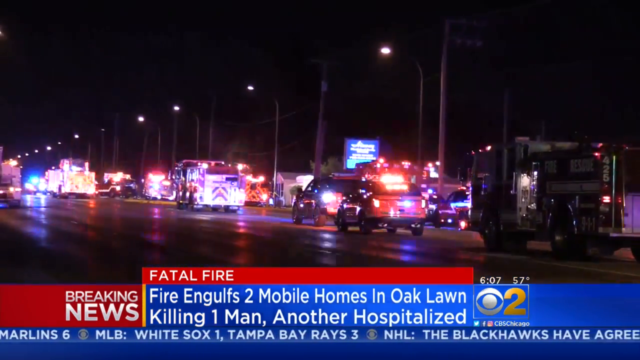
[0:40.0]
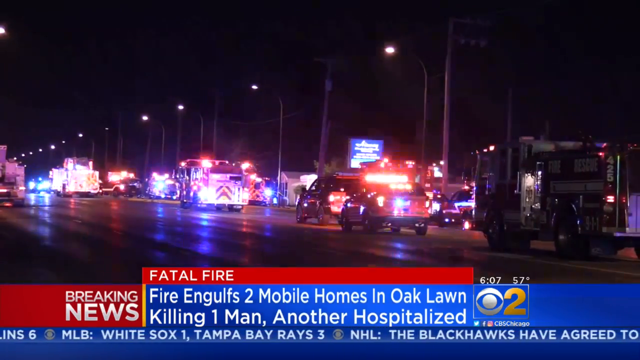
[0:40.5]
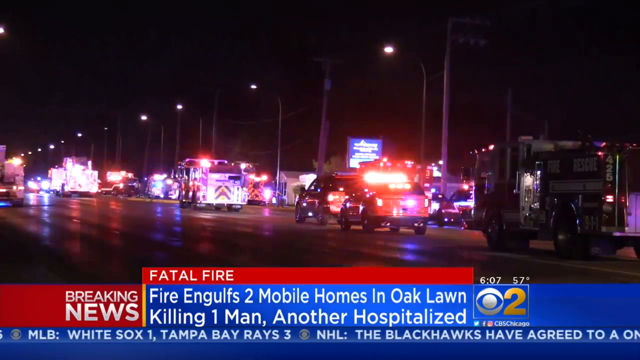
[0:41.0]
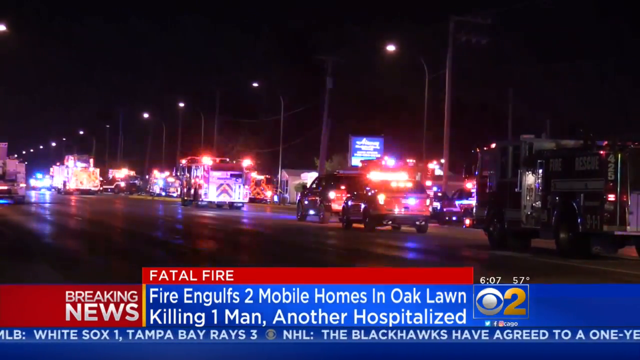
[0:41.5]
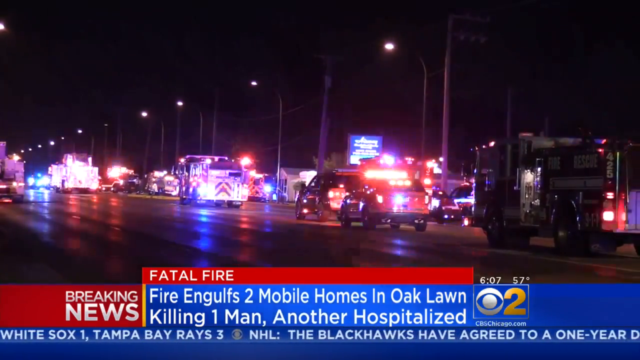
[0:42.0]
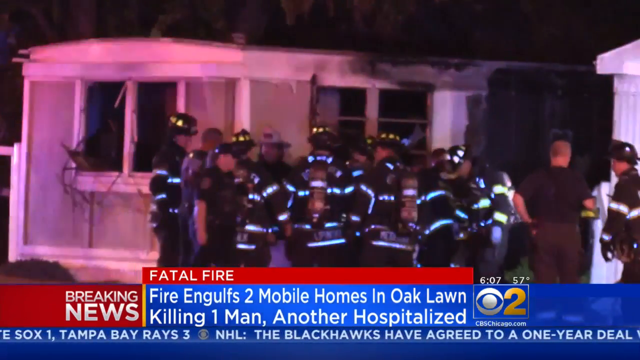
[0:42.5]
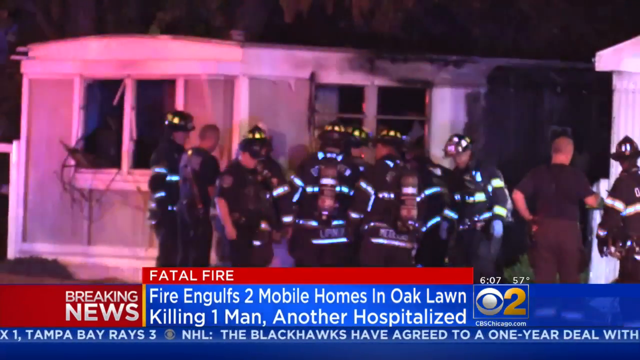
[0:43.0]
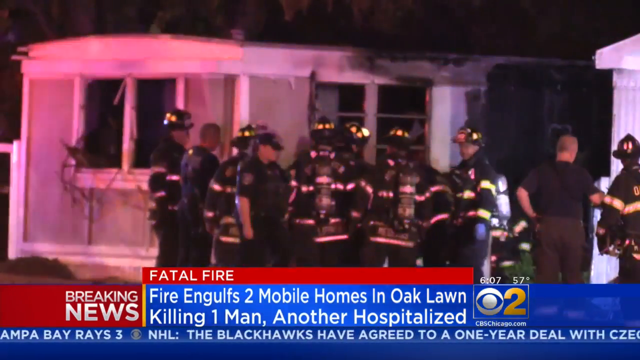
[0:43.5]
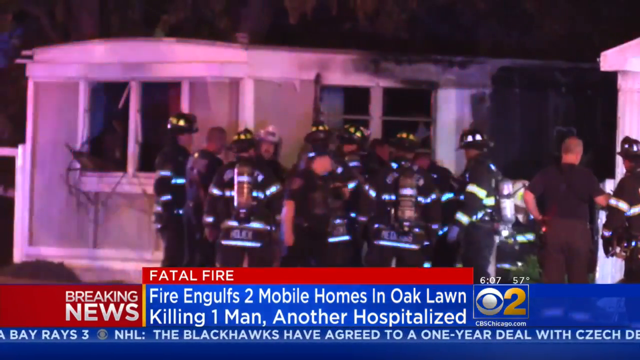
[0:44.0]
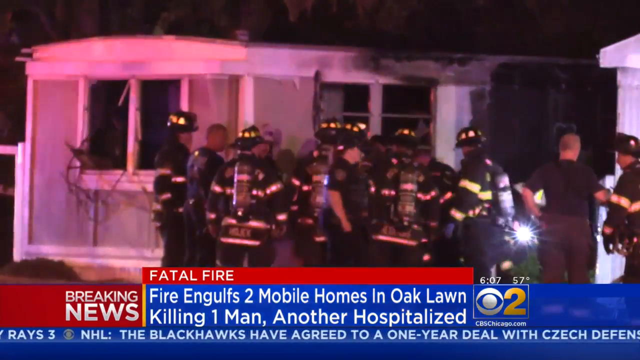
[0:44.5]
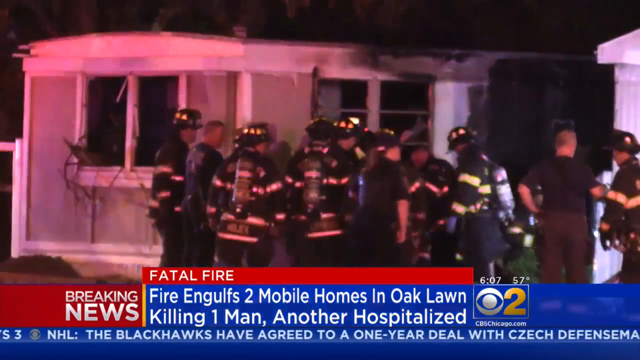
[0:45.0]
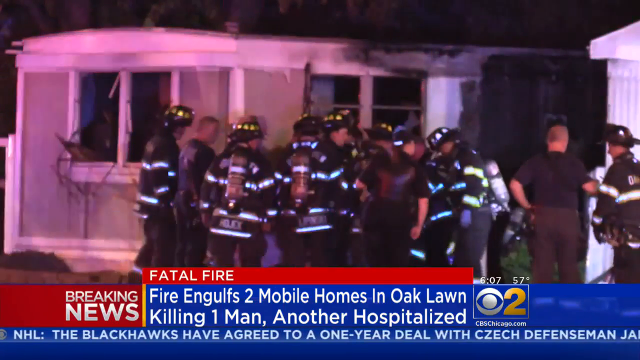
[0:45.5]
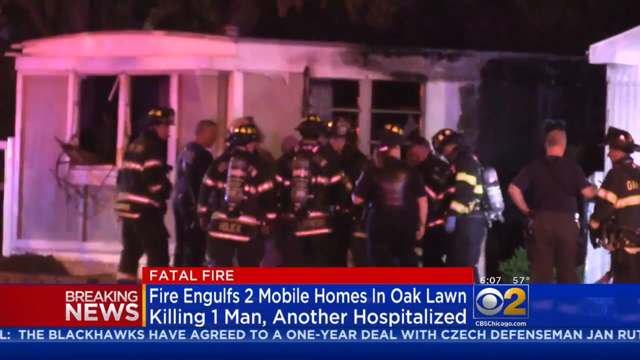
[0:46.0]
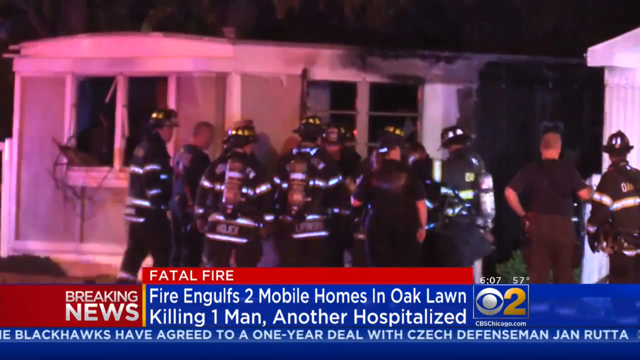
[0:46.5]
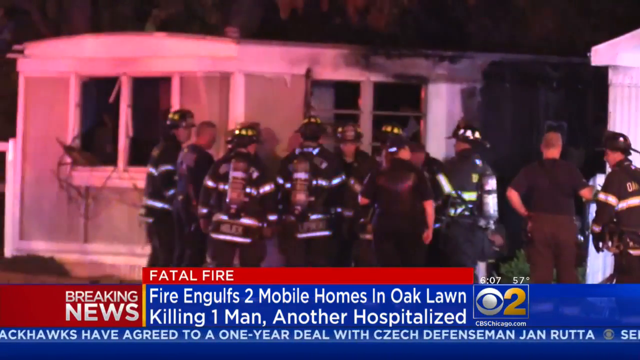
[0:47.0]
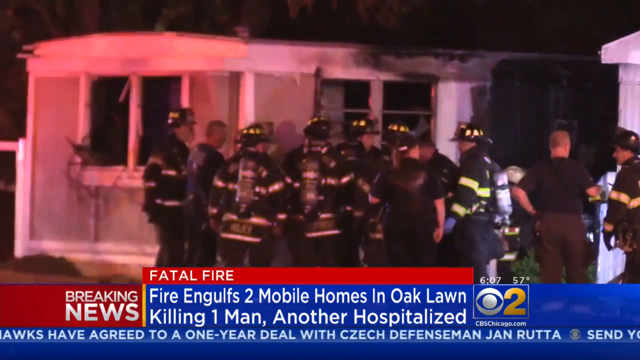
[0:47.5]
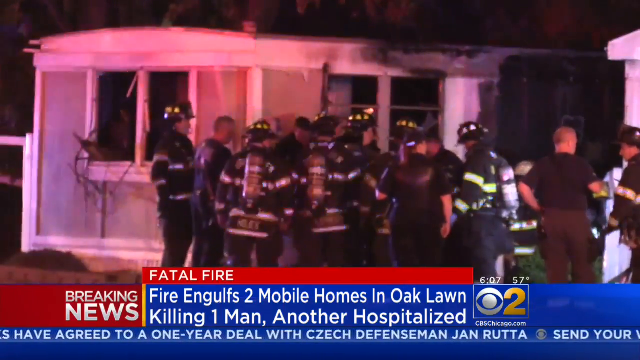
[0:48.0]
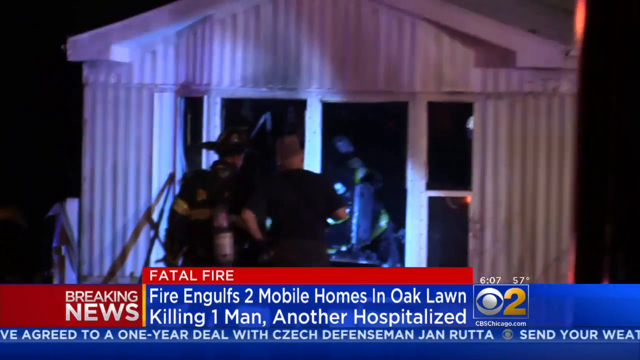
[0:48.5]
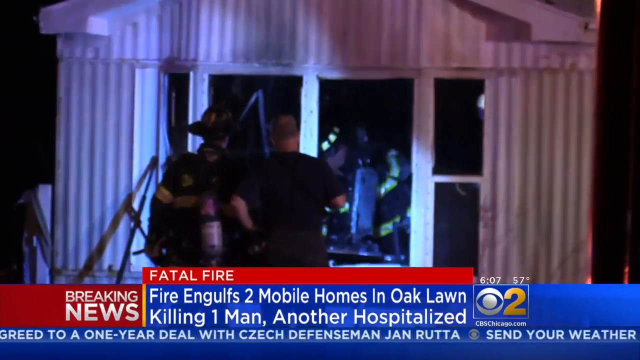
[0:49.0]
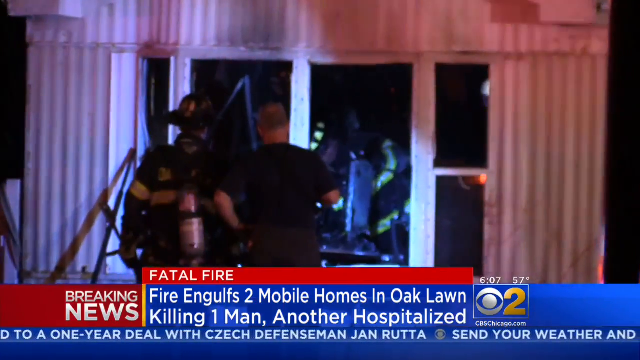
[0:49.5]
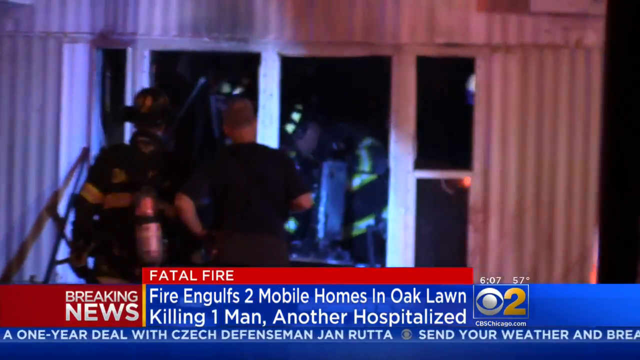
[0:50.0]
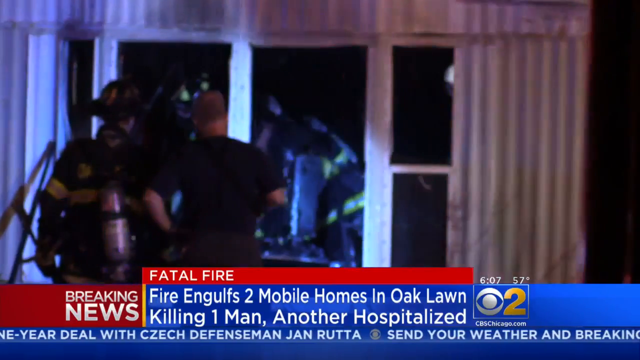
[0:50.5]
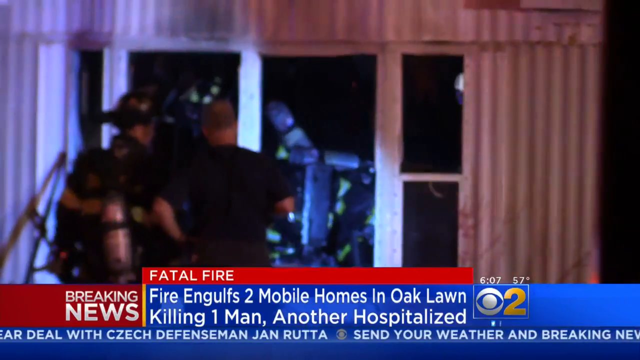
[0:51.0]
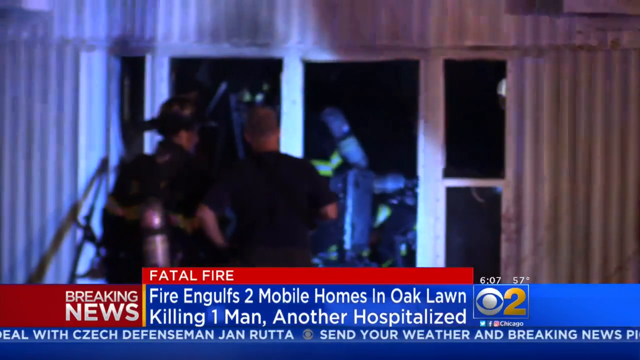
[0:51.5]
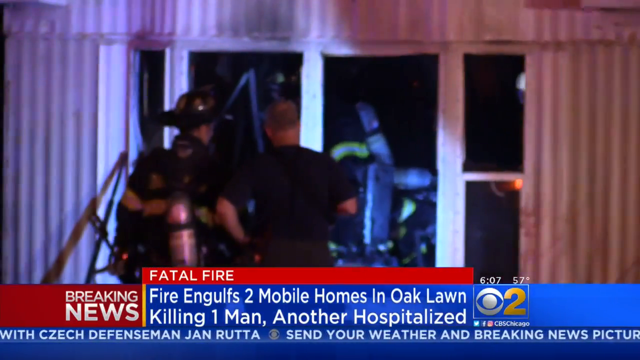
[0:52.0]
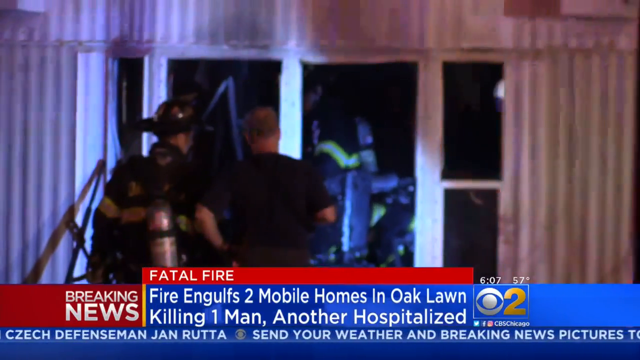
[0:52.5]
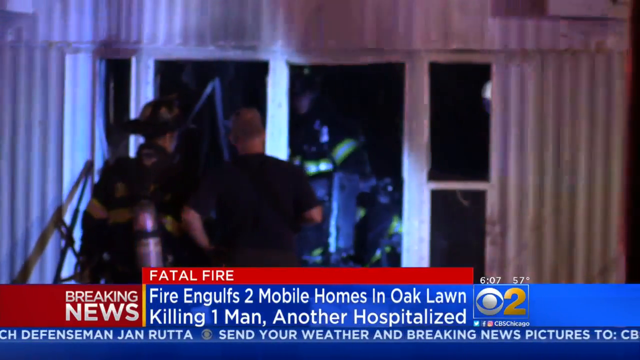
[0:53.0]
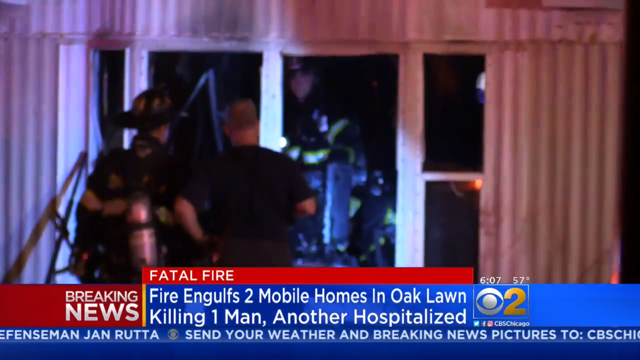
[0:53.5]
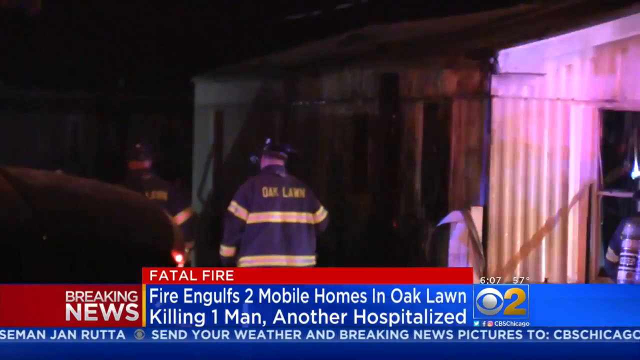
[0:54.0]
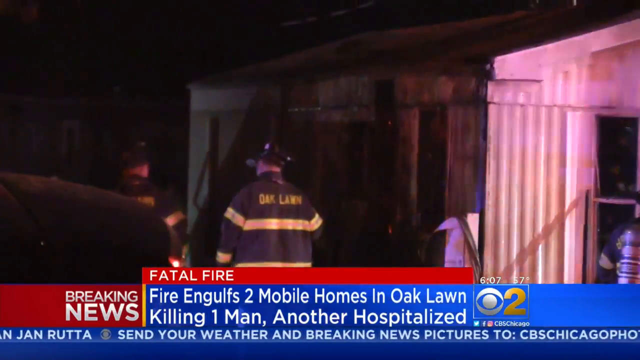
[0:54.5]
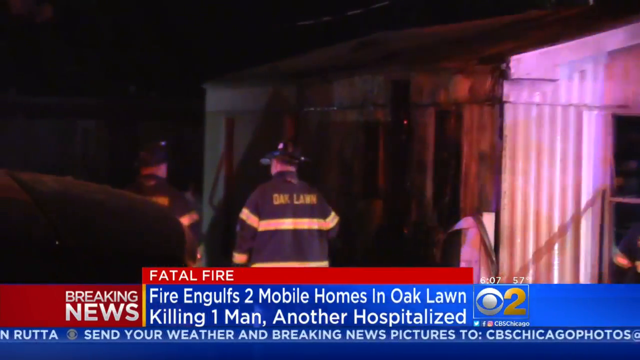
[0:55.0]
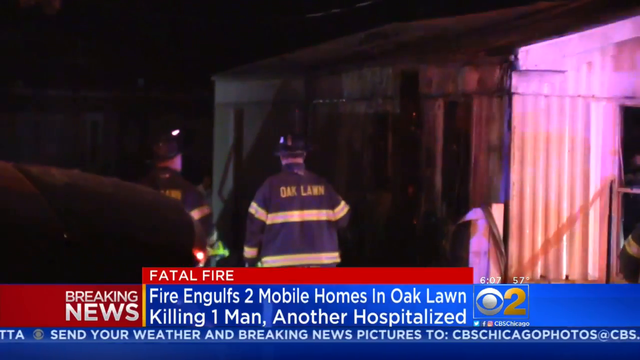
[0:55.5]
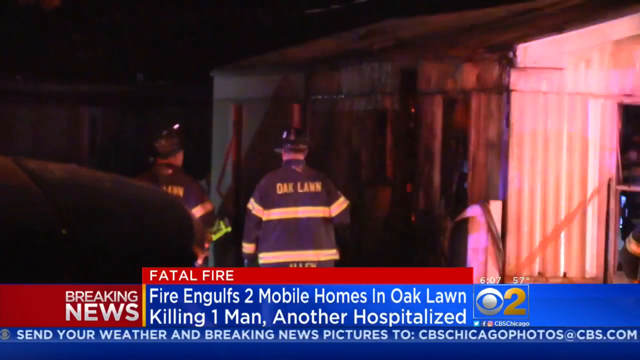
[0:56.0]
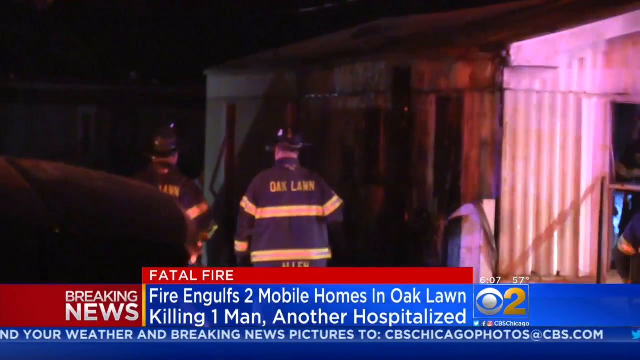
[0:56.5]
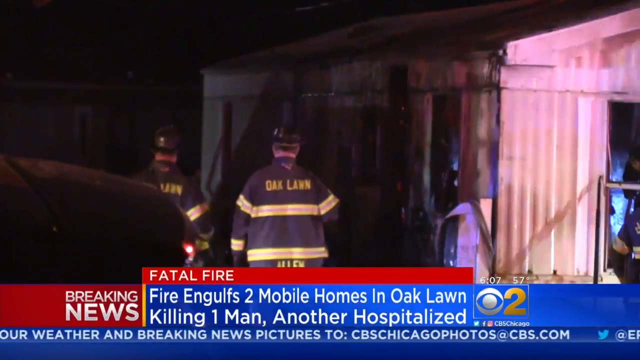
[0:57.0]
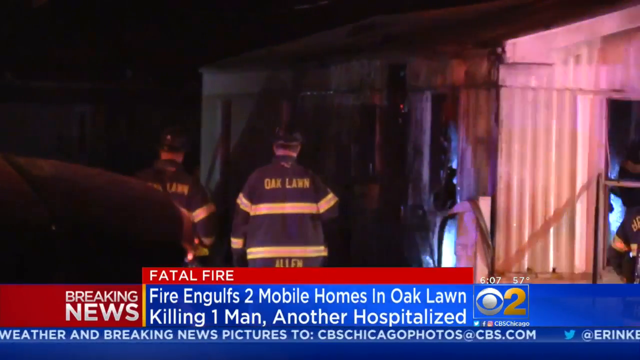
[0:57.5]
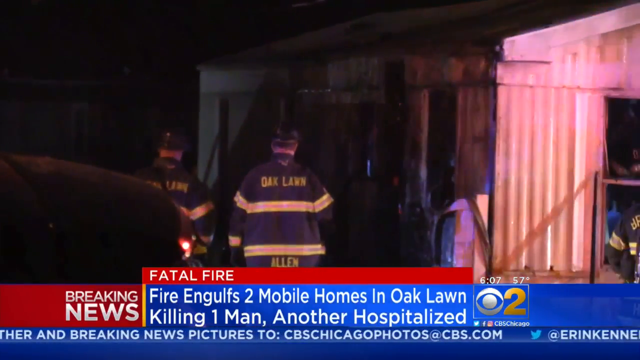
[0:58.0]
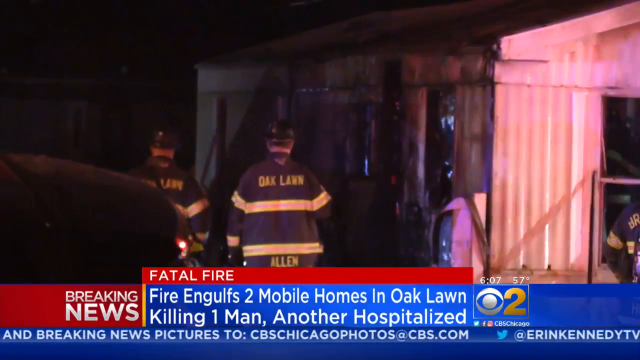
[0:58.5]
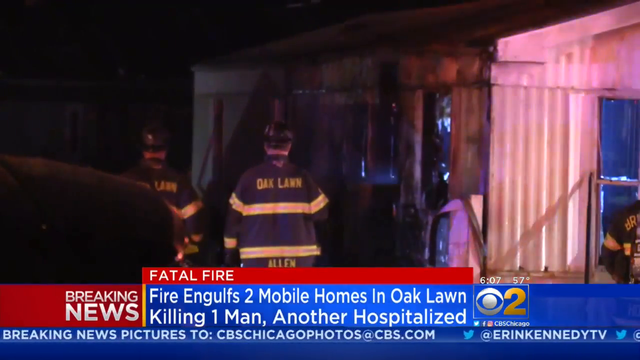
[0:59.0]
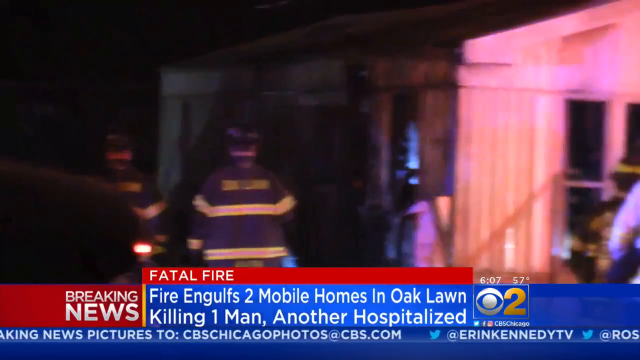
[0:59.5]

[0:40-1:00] A road carries different types of vehicles, including cars and fire brigade vans. In the next shot, a group of fire brigade members wearing protective clothing and oxygen bubbles on their backs are grouped in front of a light-colored building. In the following shot, some of these firefighters are inside the building, and two people are in the foreground outside it. One of these two wears a black shirt and dark pants, has an oxygen bubble on his back, and wears a black jacket with a yellow line in the center. Further footage shows the outside of the building, with two men on the left wearing black clothes with yellow bands and yellow writing. The front of the building is illuminated by the fire brigade's lights.